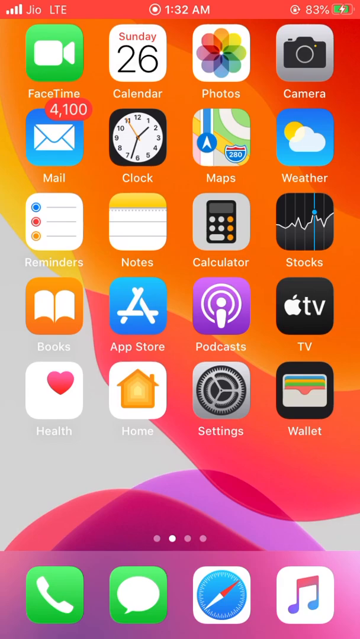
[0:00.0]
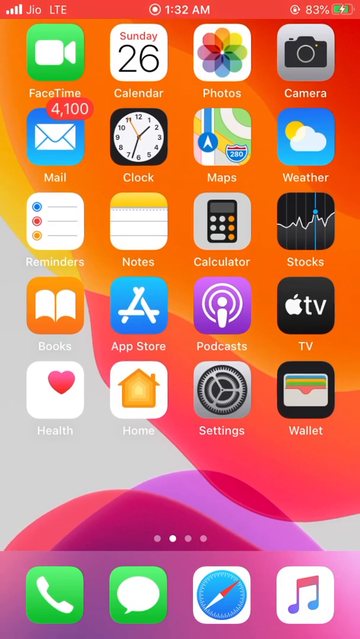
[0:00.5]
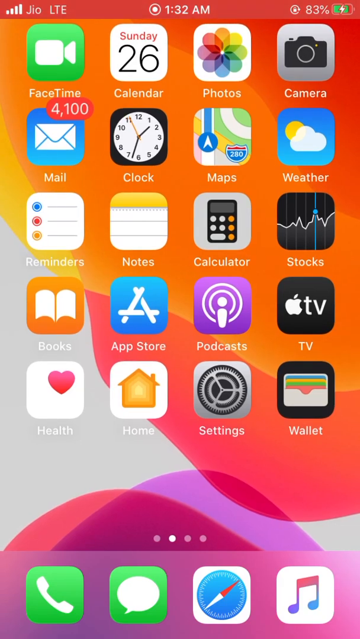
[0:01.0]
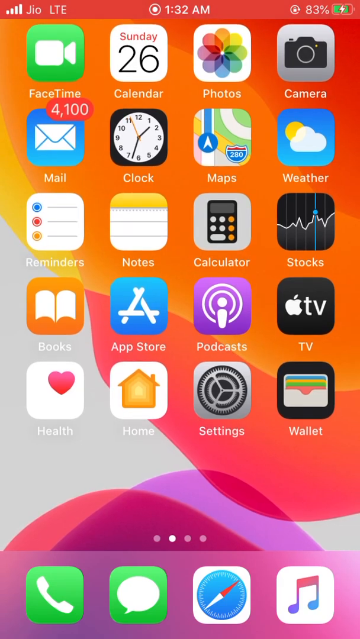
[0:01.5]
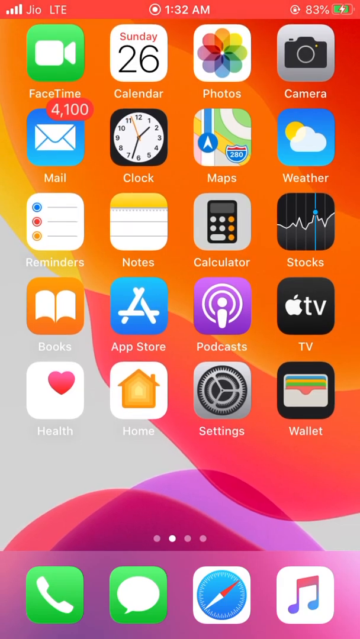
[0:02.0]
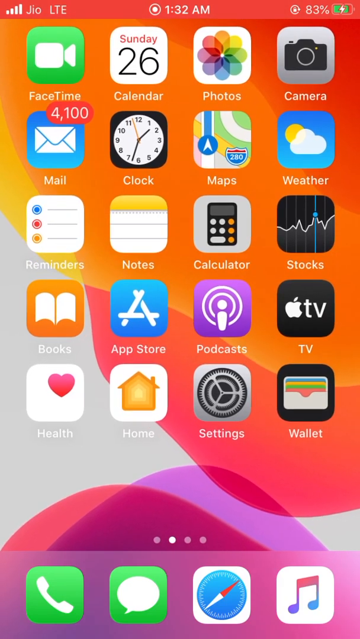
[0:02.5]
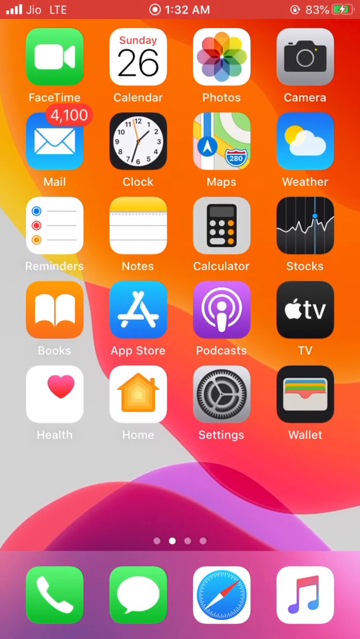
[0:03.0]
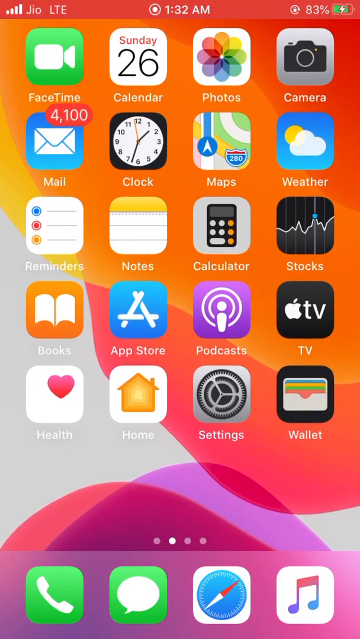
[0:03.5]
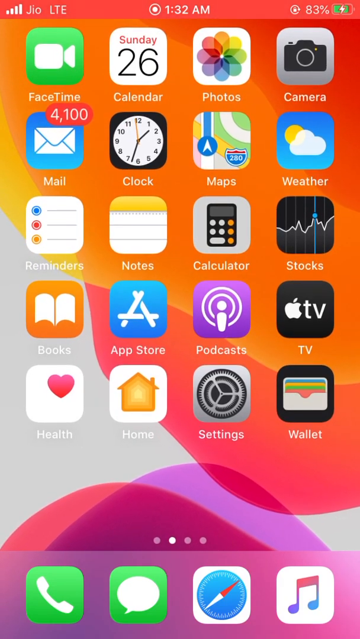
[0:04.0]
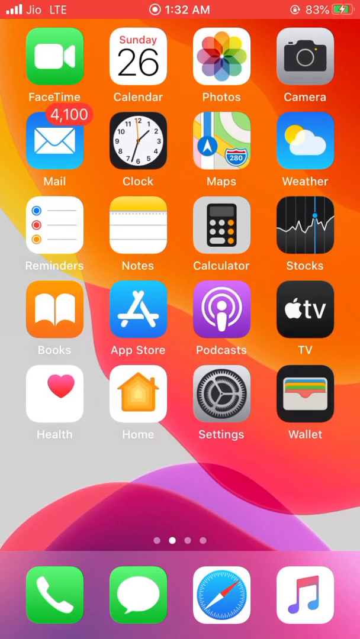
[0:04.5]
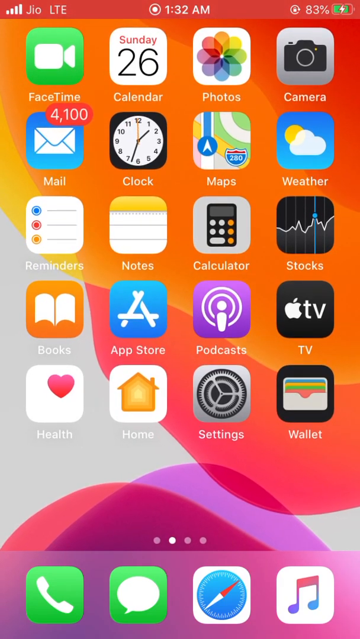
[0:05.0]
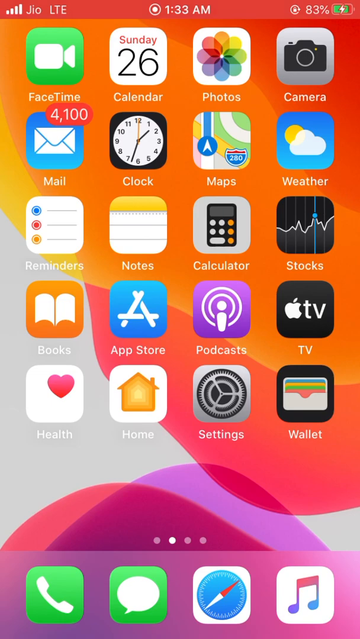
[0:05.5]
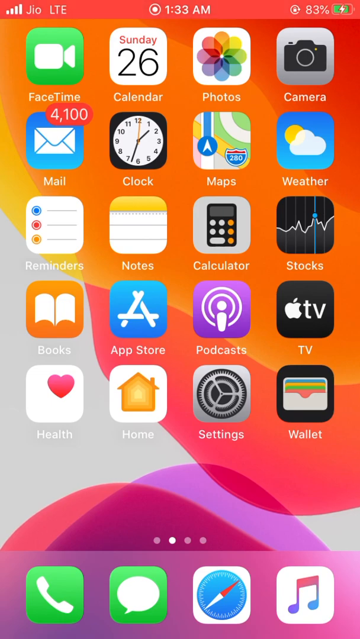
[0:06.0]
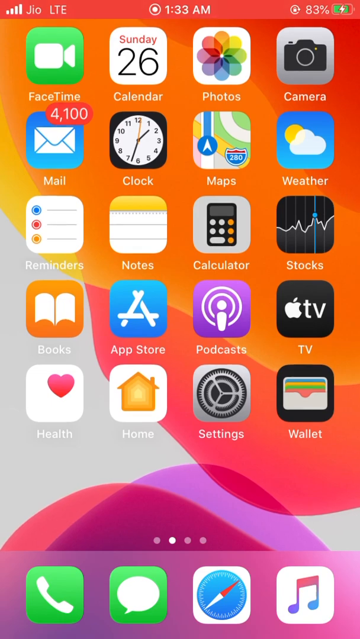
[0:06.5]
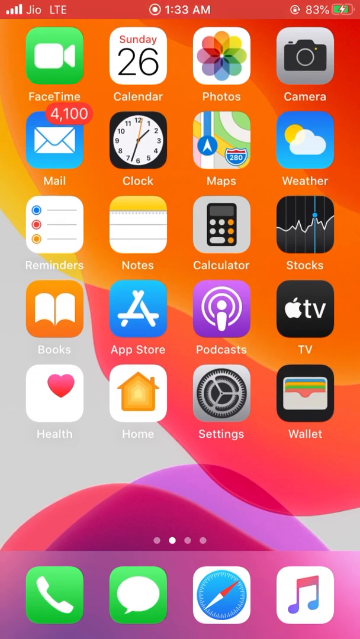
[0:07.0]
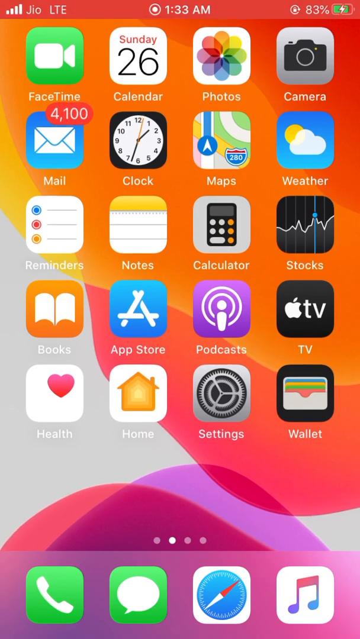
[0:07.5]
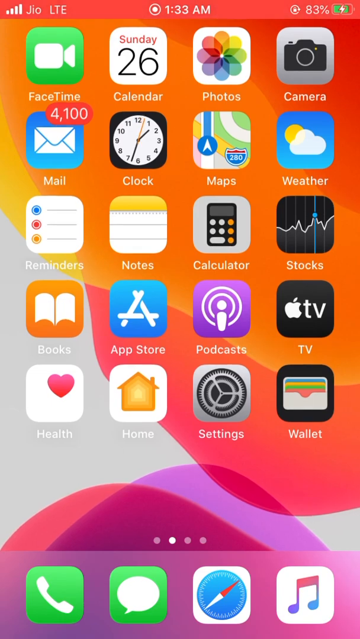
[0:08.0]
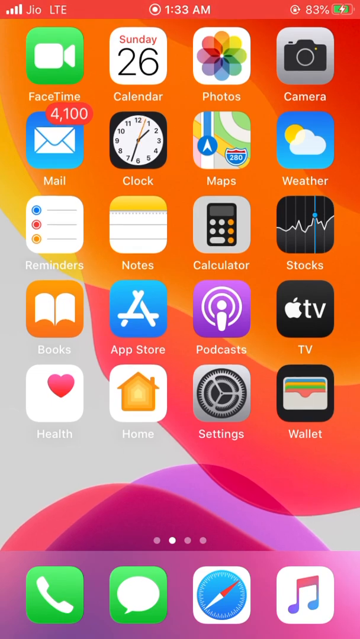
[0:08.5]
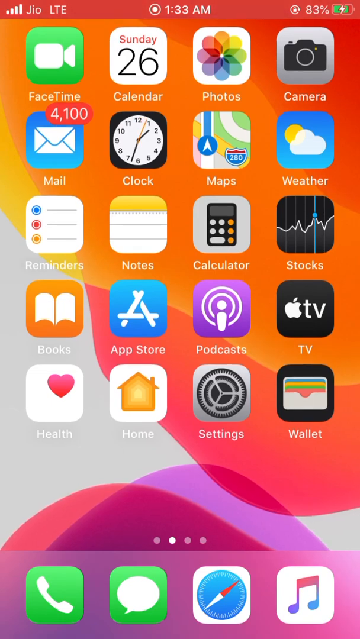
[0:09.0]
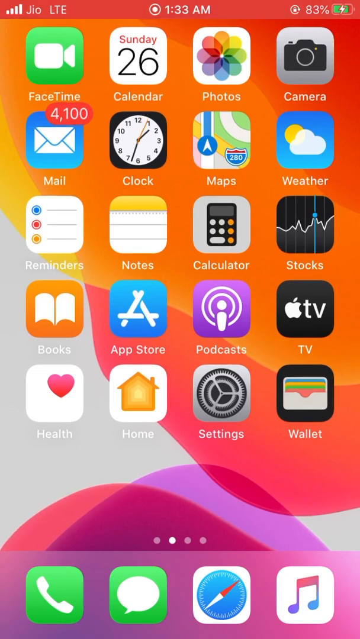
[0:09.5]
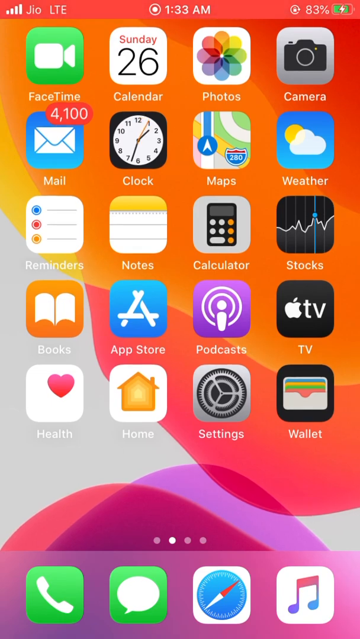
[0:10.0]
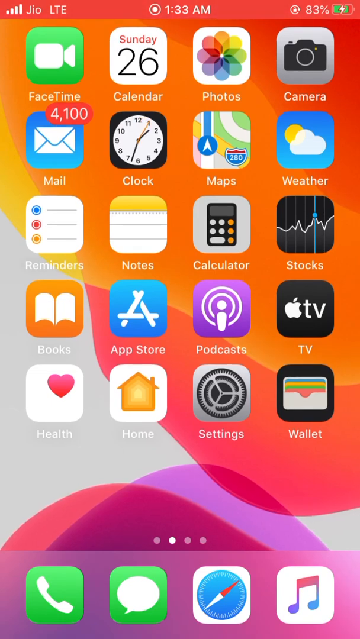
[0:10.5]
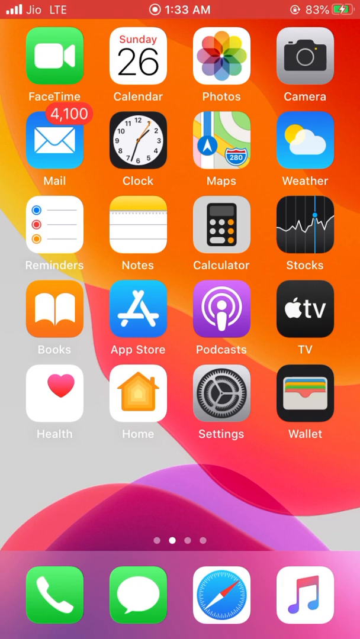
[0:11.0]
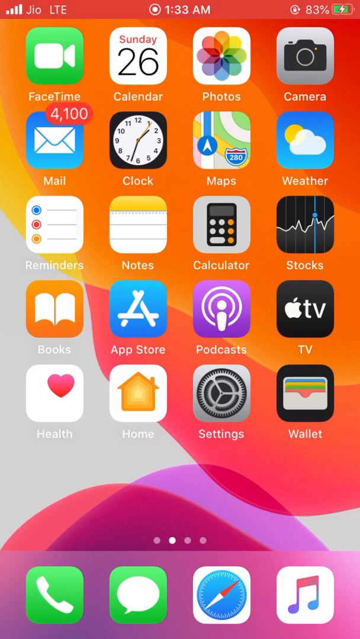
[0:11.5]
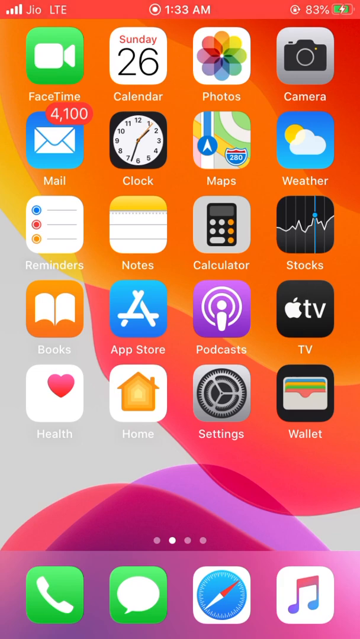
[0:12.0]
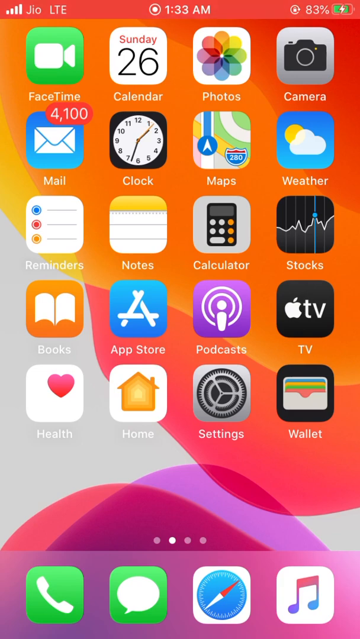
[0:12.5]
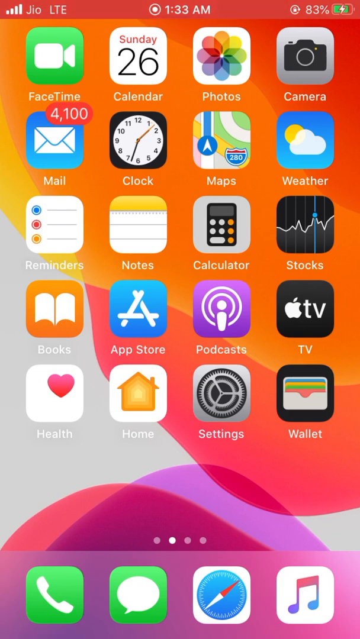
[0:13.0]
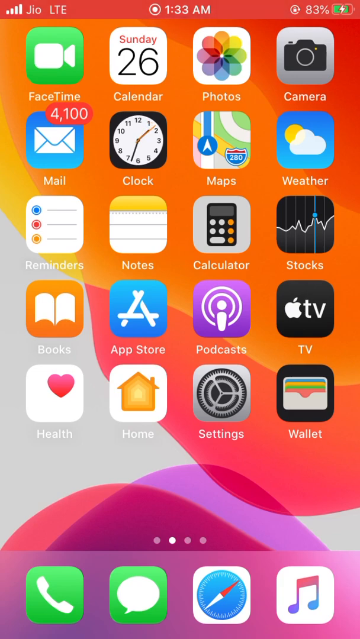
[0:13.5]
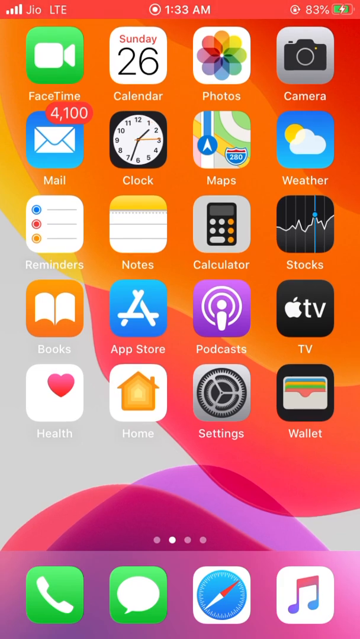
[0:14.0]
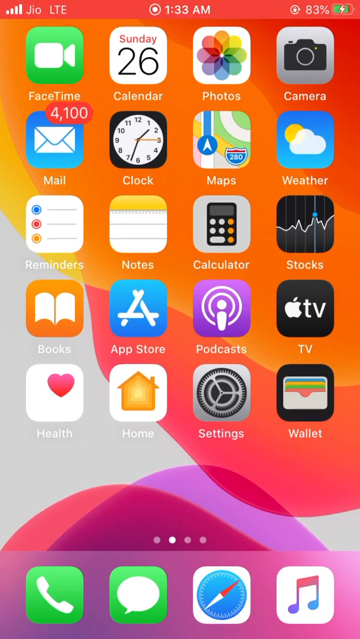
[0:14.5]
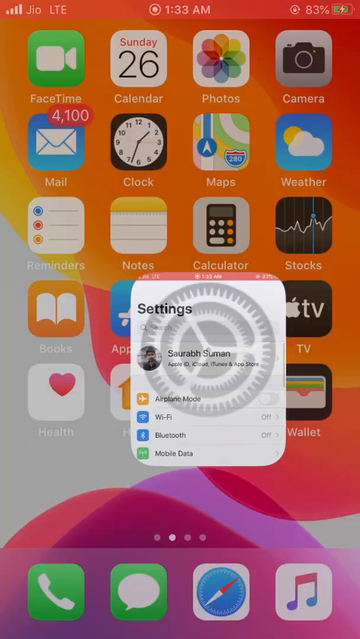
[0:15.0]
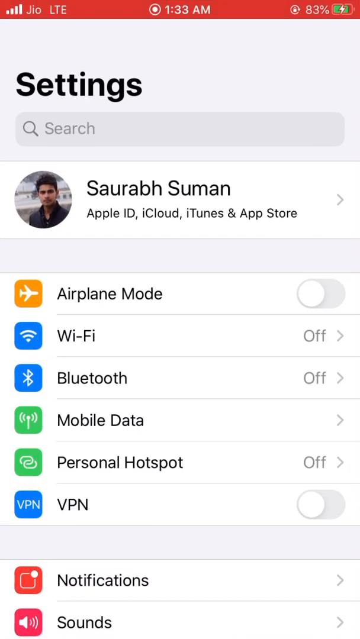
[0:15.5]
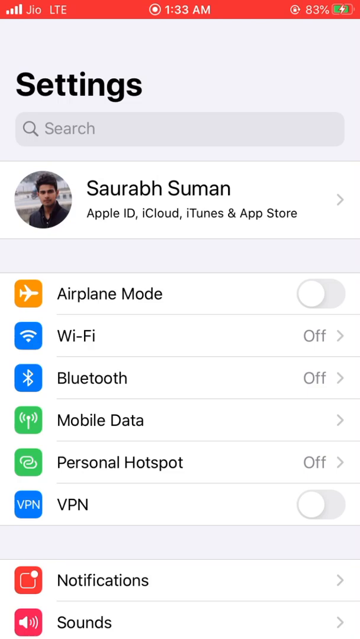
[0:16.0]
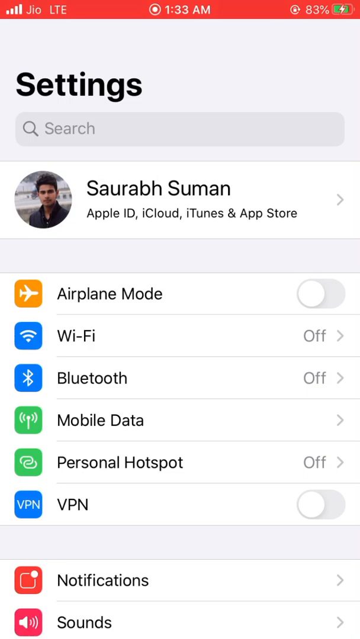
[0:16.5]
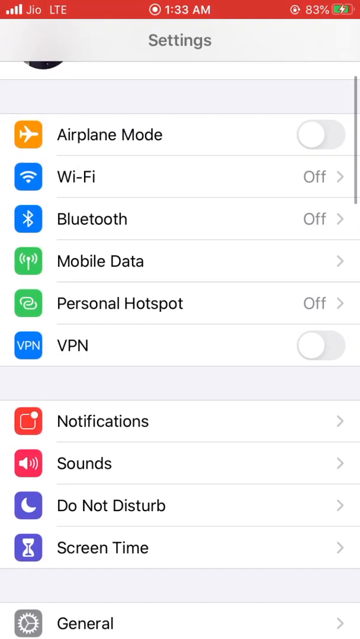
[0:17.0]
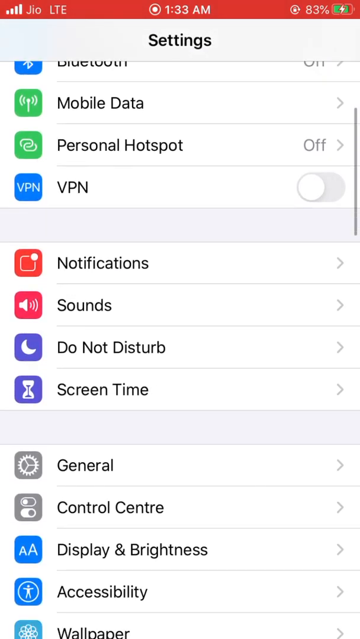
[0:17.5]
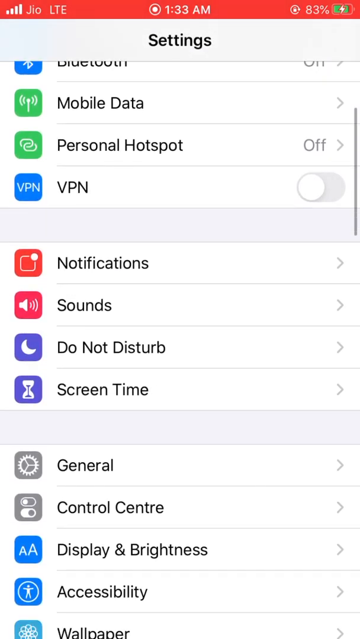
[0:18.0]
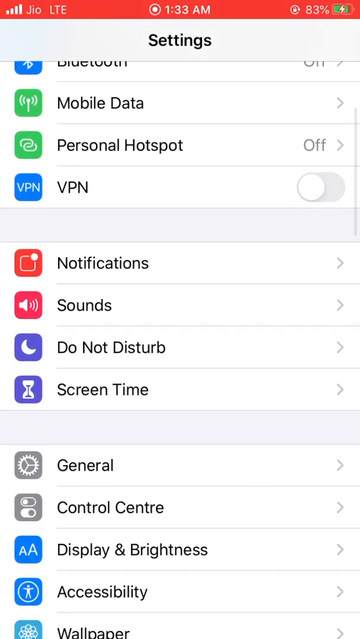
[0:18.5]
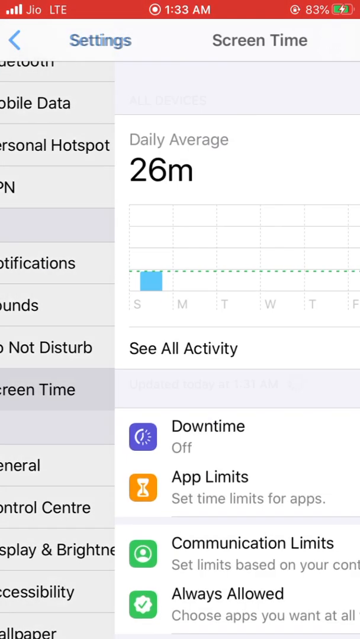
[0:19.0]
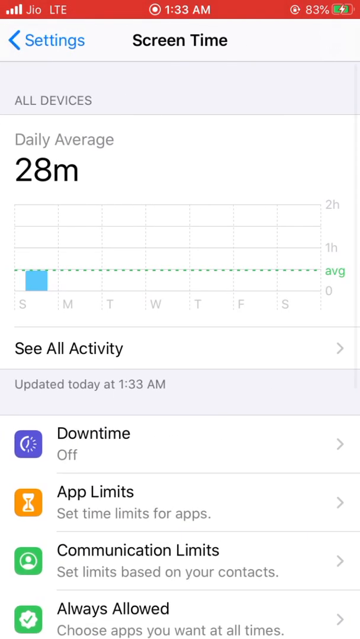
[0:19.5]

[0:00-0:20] A phone home screen is shown, apparently an Apple home screen, with Safari, the App Store, Apple TV, a settings app that looks like the Apple settings, and more. All five rows of apps are filled, with four apps in each row. The message/email app is the first app in the second row and shows 4,100 notifications. For a while nothing happens on screen. Then the user opens Settings, where the profile name is Sarbat Suman. They scroll down to the device settings, to the Screen Time option just above General, tap Screen Time, and the average screen time appears.